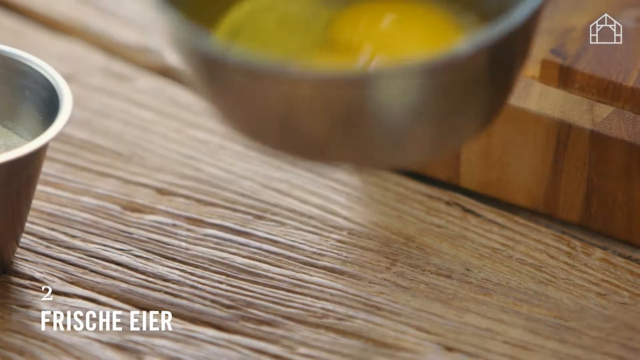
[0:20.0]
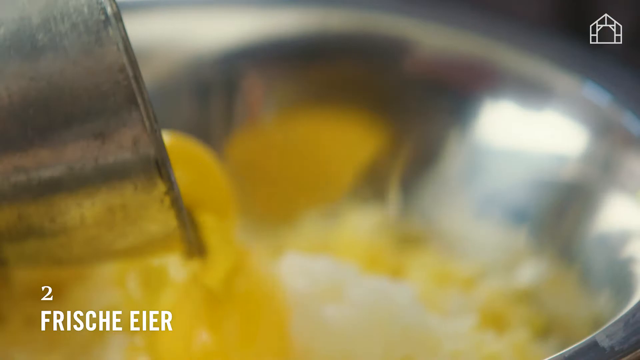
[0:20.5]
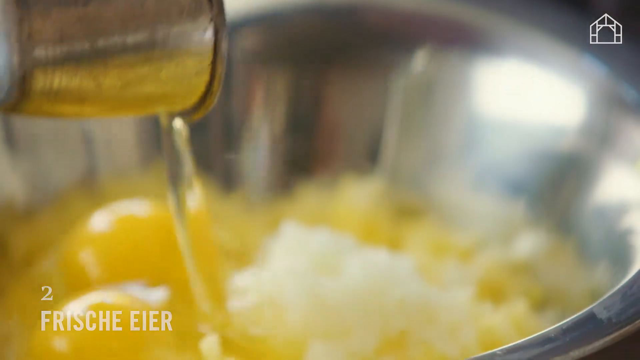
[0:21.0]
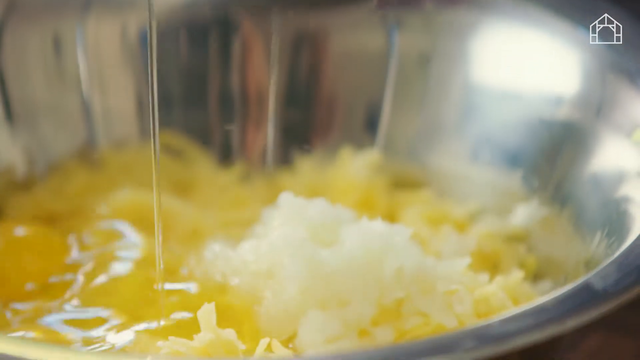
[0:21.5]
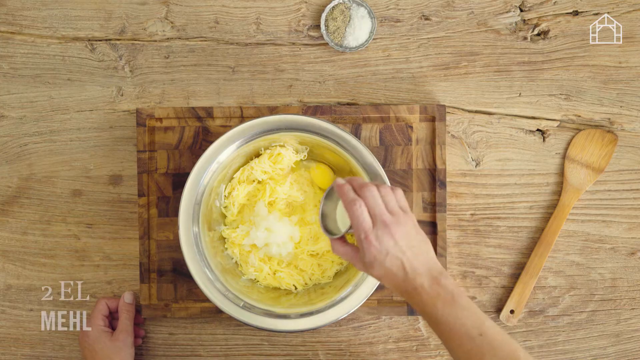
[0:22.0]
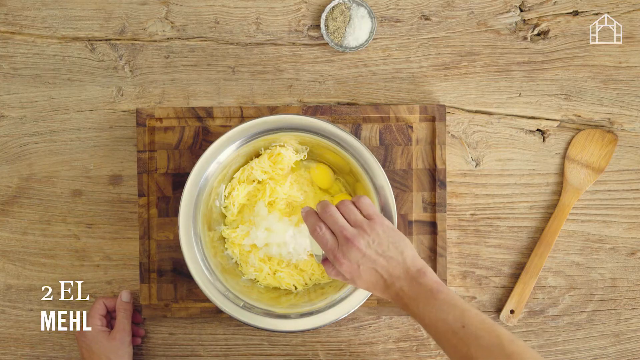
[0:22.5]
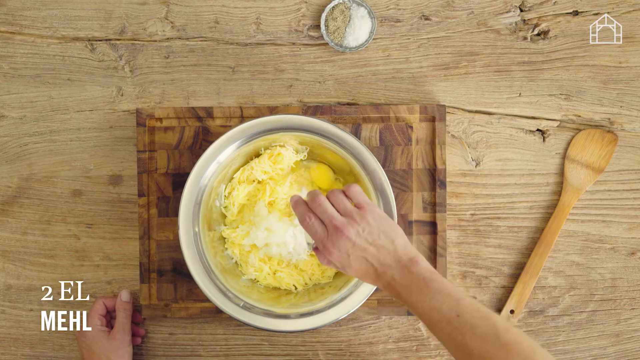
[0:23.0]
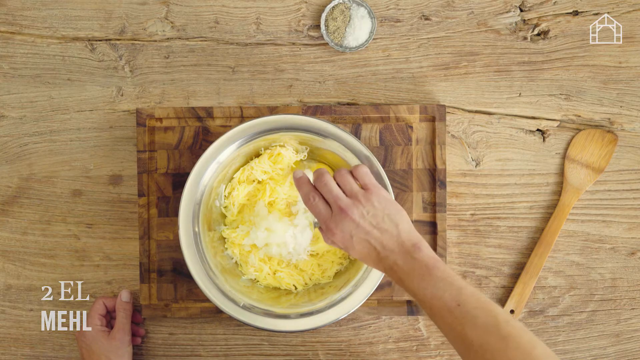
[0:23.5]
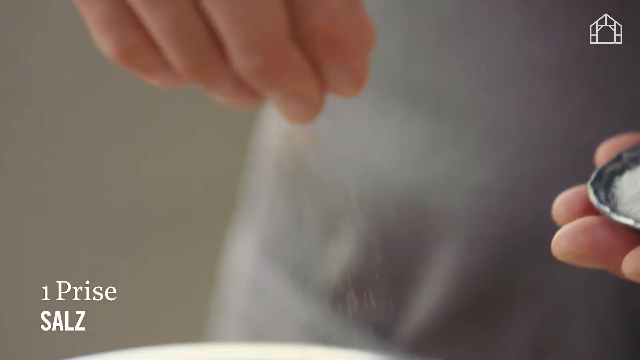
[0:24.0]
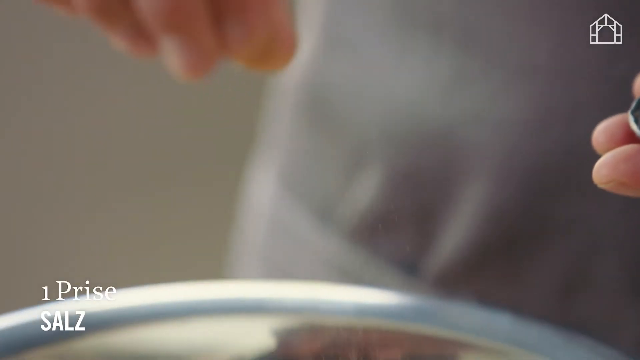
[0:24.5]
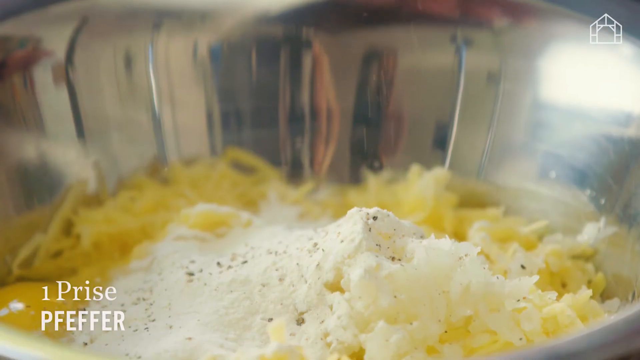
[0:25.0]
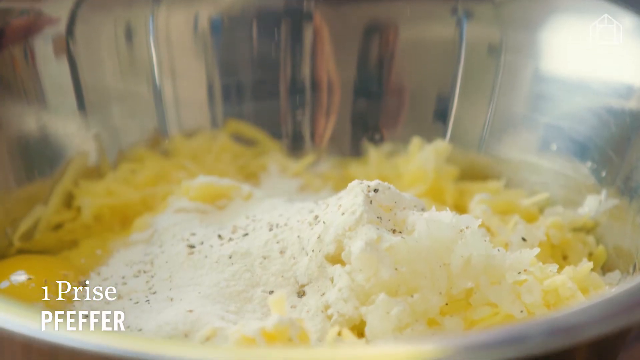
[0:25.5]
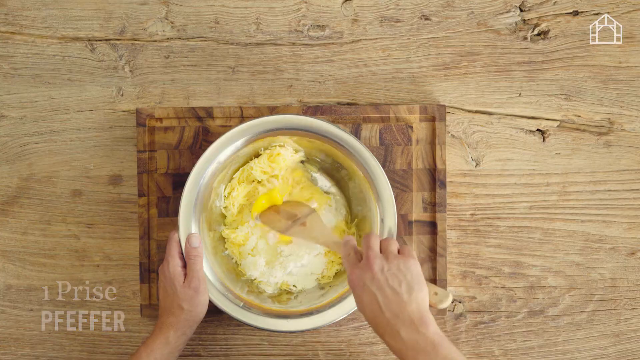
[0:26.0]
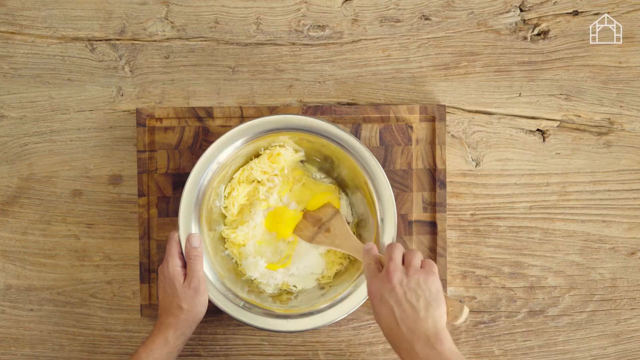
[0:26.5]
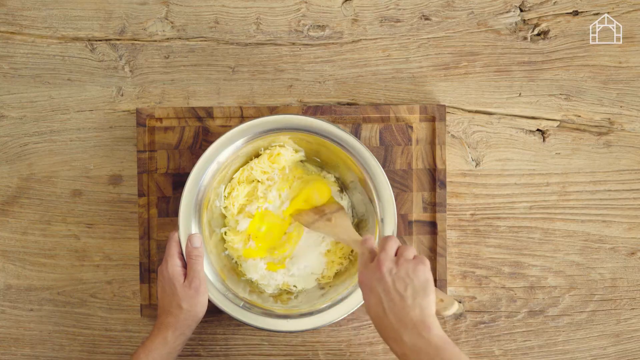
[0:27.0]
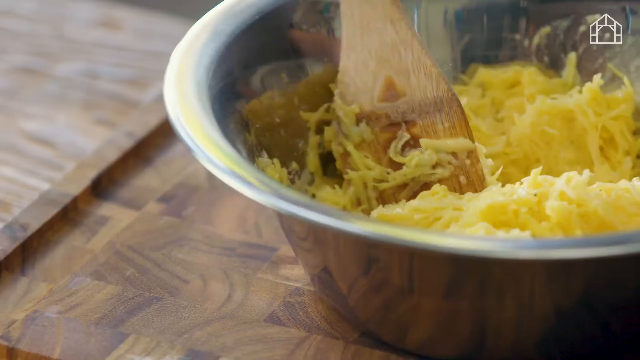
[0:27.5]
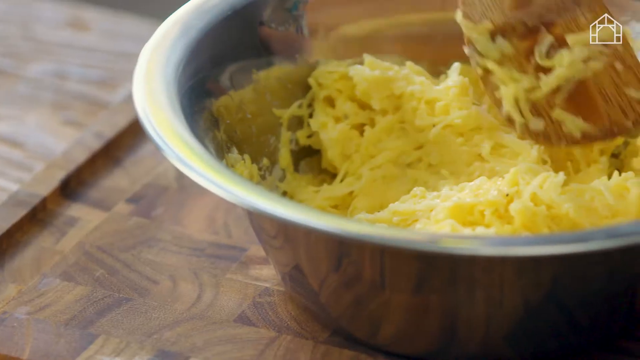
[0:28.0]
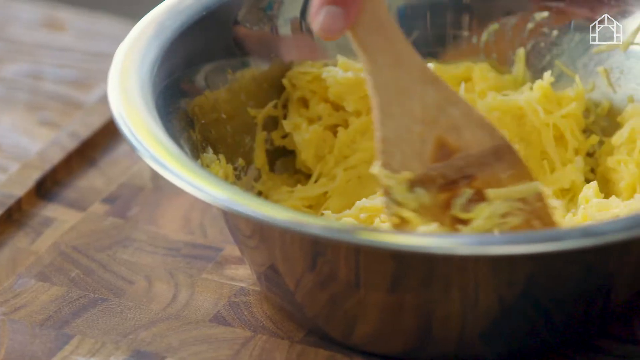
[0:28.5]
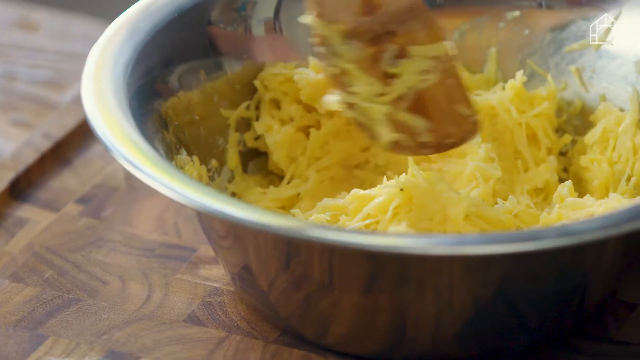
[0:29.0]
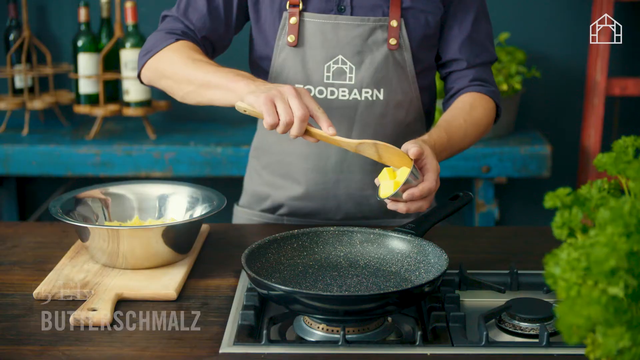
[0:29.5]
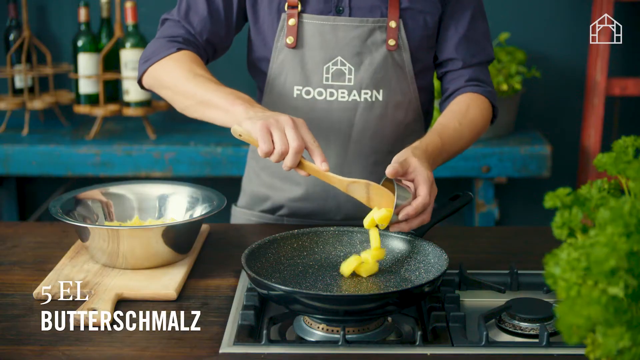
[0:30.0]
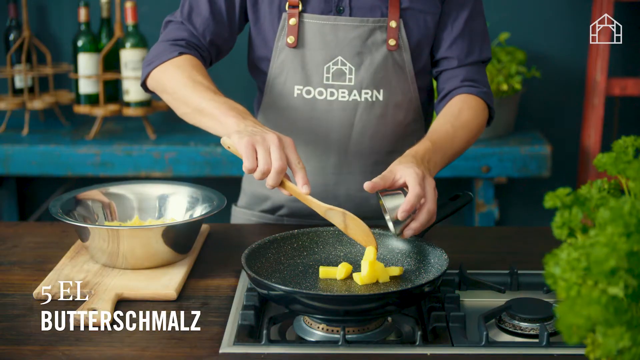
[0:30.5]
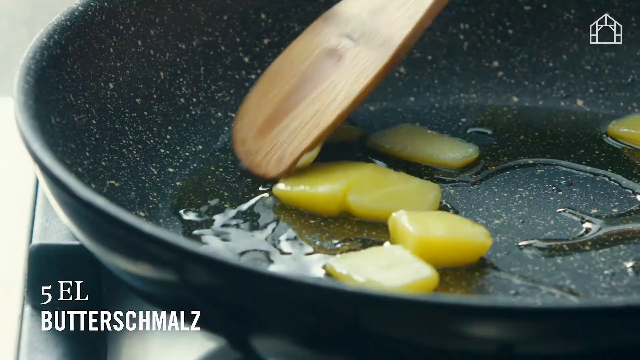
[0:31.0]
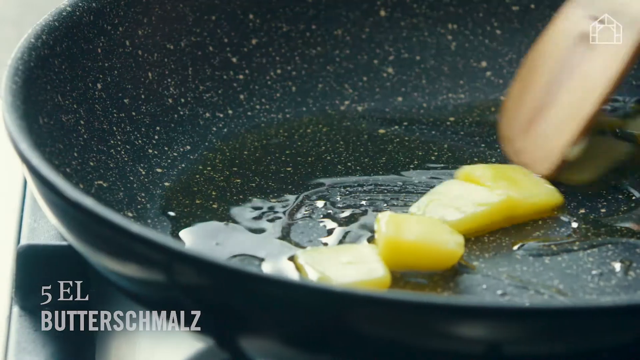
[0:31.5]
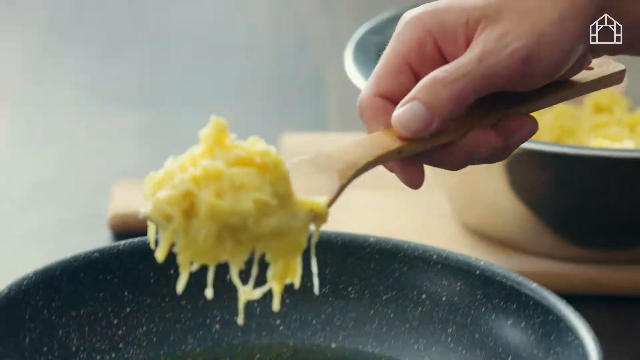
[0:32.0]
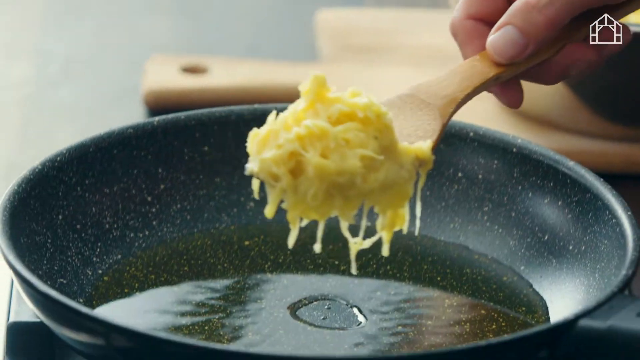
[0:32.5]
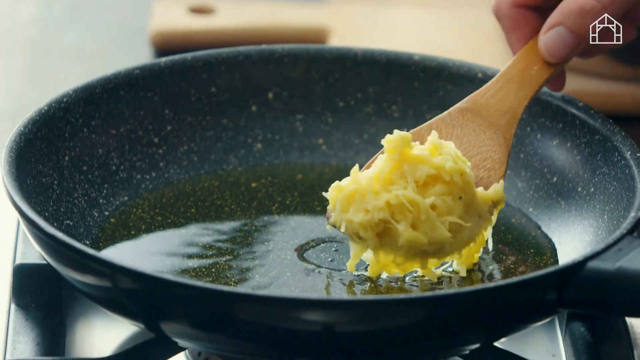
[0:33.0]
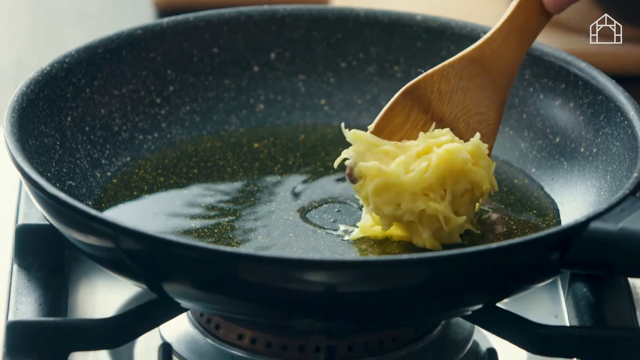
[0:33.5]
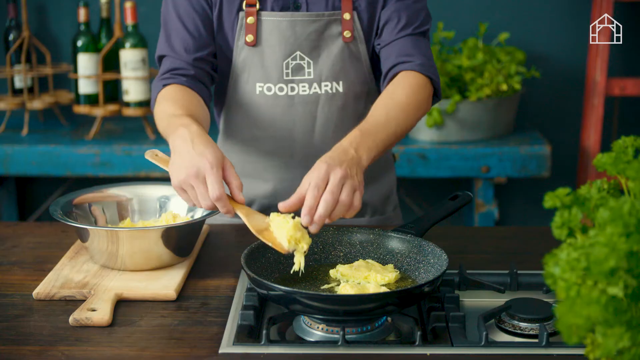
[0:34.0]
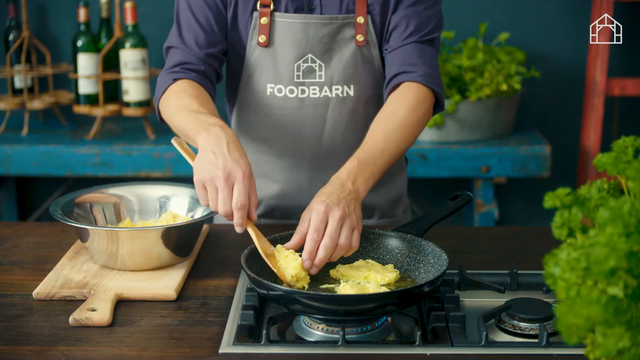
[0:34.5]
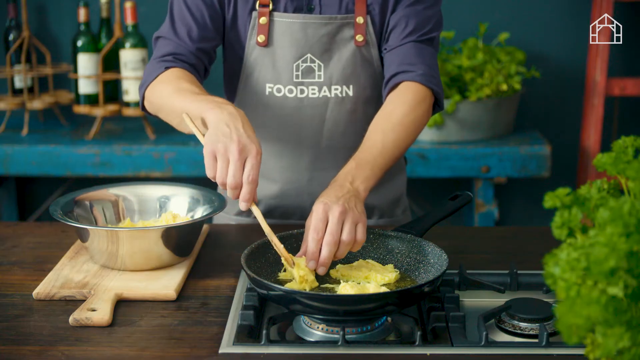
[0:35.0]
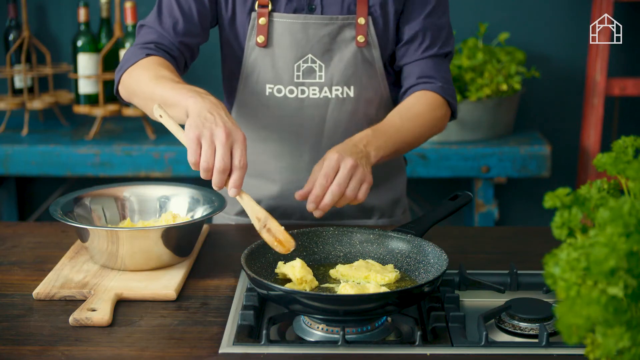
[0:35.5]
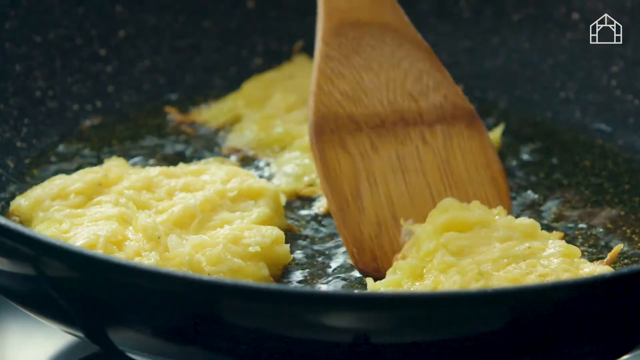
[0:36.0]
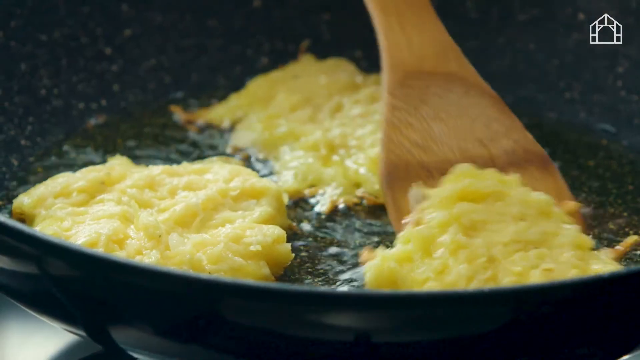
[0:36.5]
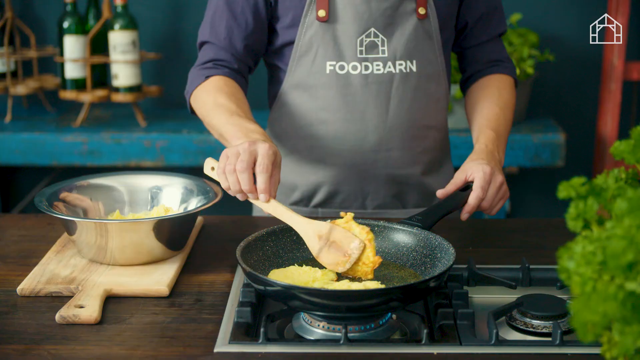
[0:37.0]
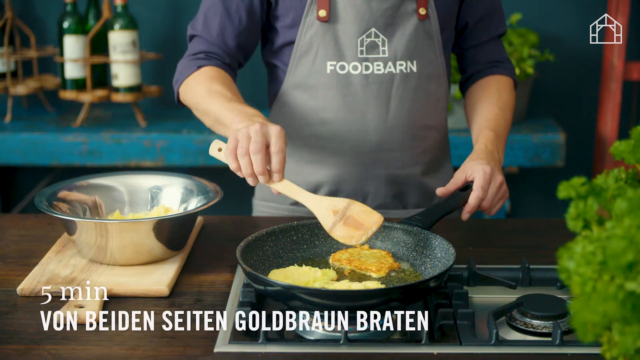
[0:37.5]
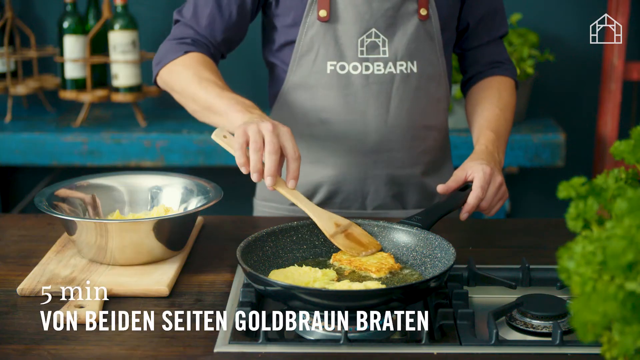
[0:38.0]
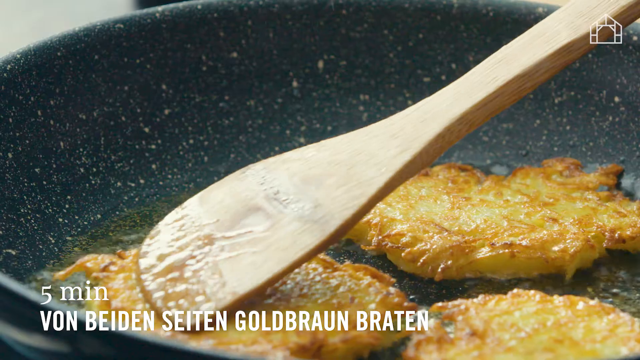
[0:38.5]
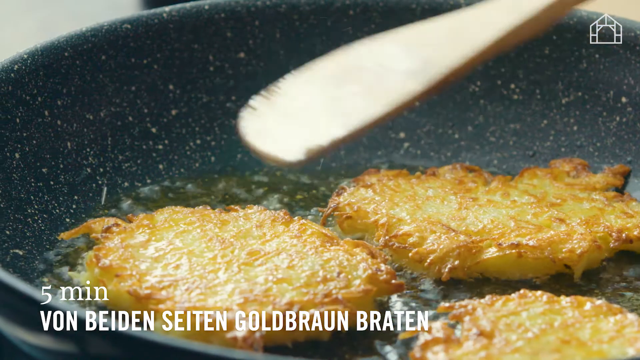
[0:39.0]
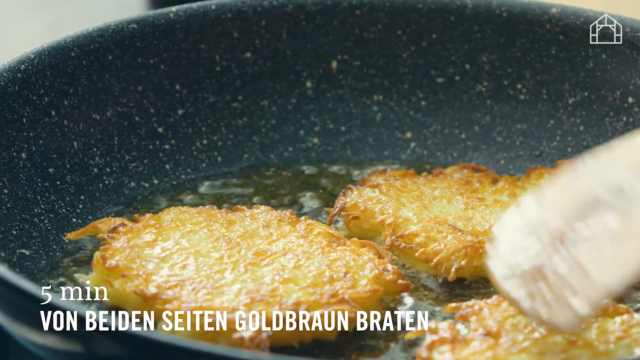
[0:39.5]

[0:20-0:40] A few eggs are dumped into the bowl with the shredded potatoes and onions, and two egg yolks can be seen falling in. What appears to be salt is added, along with some pepper. A hand stirs the mixture with a wooden spoon, followed by a close-up of just the spoon moving in the bowl, turning the ingredients over. Next, a person stands behind a stove top, wearing a gray Food Barn apron over a blue shirt. A frying pan is on the heating element, and the person uses a wooden spoon to put what appears to be butter into the pan. After a short jump forward, the butter, or whatever fat it is, is liquid in the bottom of the pan. The person places a dollop of the potato-onion-egg mixture from a wooden spoon into the frying pan and flattens it a little. Three of these pancakes are in the pan, and the person turns them over with the wooden spoon or flipper.